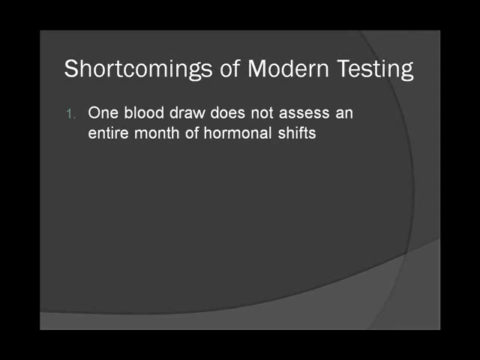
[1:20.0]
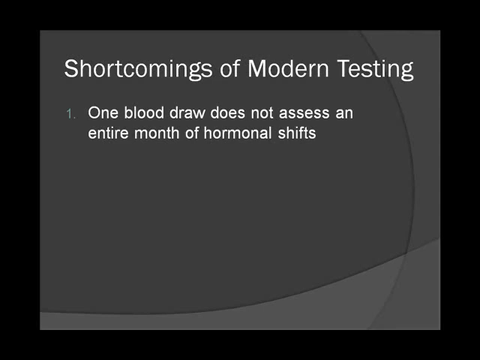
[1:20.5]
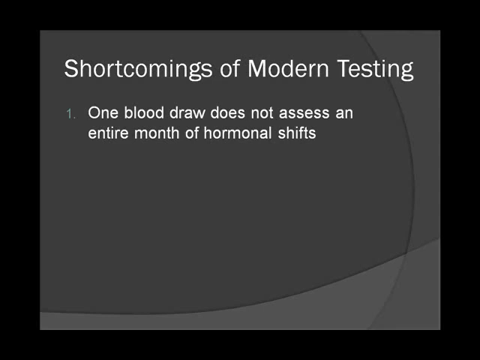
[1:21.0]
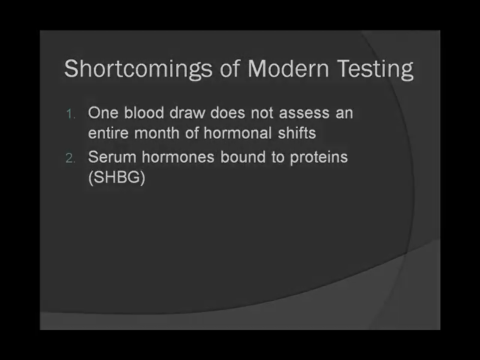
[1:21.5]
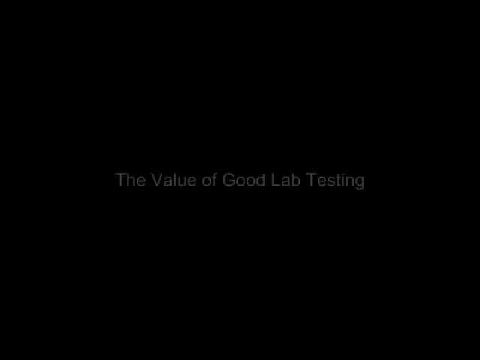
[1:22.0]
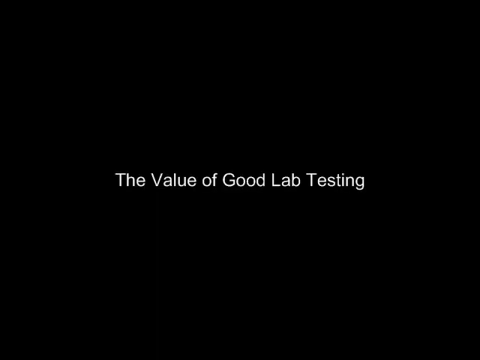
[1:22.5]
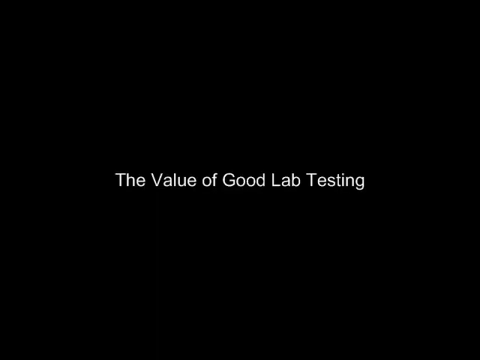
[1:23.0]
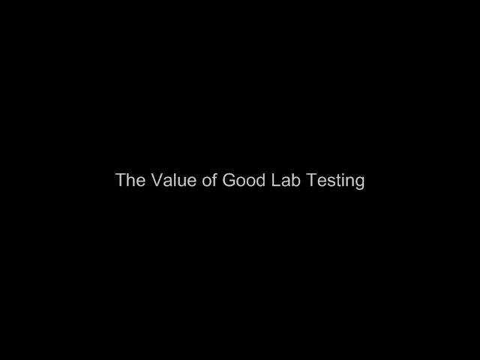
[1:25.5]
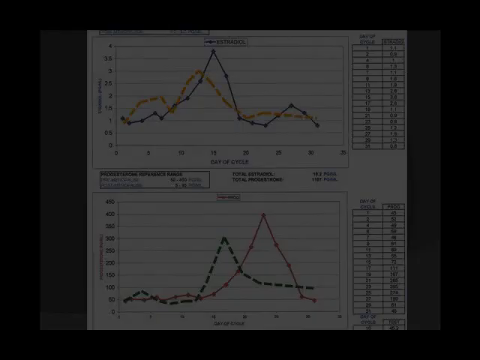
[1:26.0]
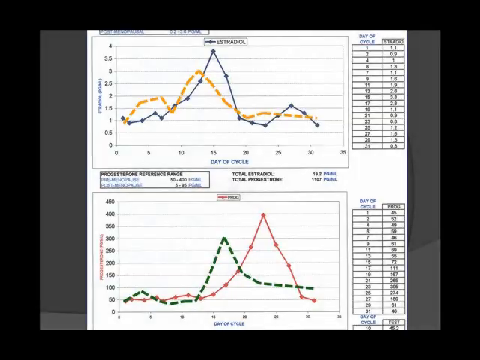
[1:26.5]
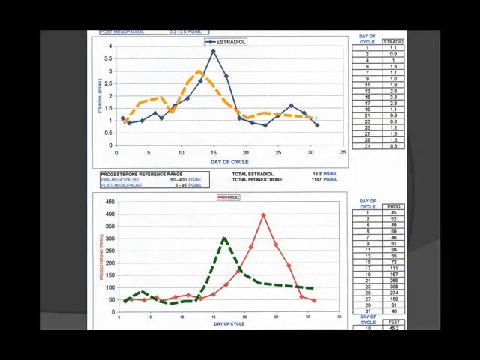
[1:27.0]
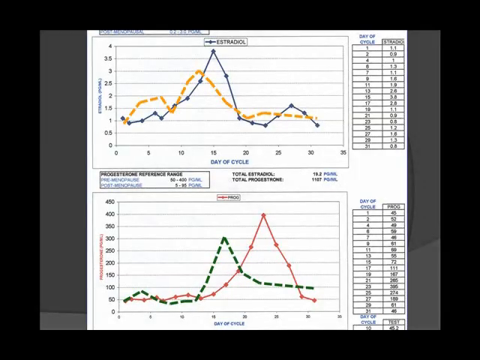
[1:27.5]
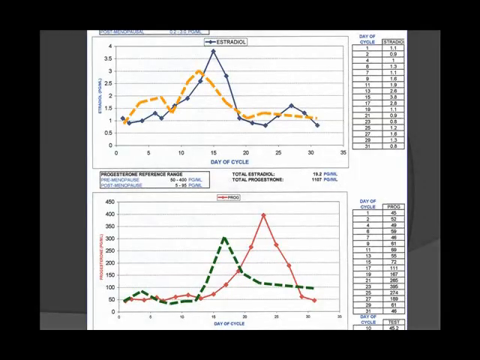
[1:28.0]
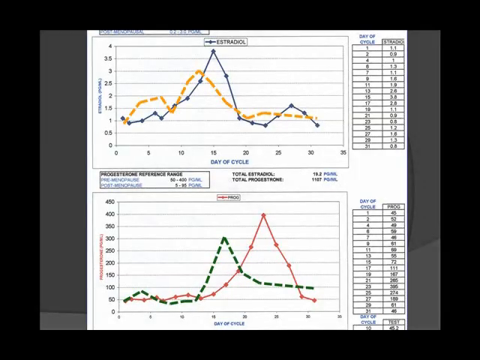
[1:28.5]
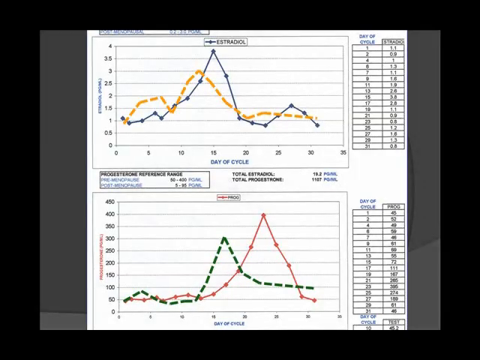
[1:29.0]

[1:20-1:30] A still picture appears within the same black frame. The vertical sides of the frame are shorter than the horizontal top and bottom, but are thicker than the top and bottom by maybe an eighth of an inch. Inside the frame are multiple intersecting circles, one of which extends beyond the frame, and where their edges intersect the colors change. The main color, taking up 85% of the area, is a medium to dark gray. A portion off to the left is a lighter gray. There are two bottom portions: the smallest, in the lower right-hand corner, is another shade lighter, and the more dominant lower portion, spanning approximately 80% of the frame's width but only about 5% of its height, is the lightest, a very light gray.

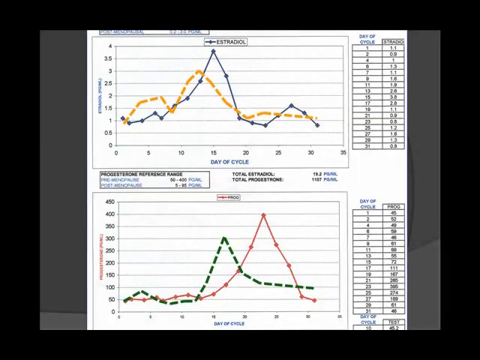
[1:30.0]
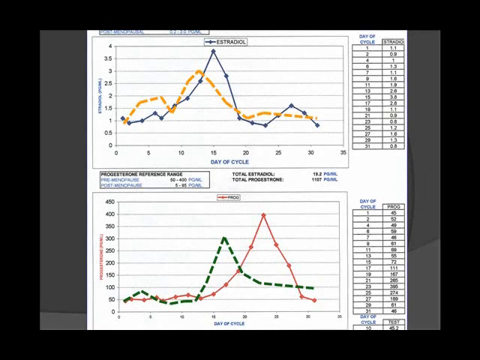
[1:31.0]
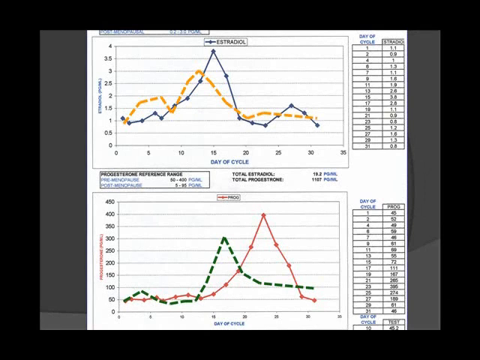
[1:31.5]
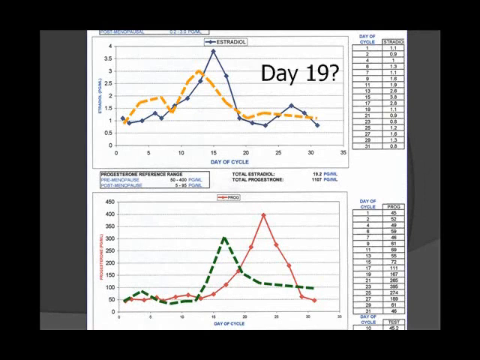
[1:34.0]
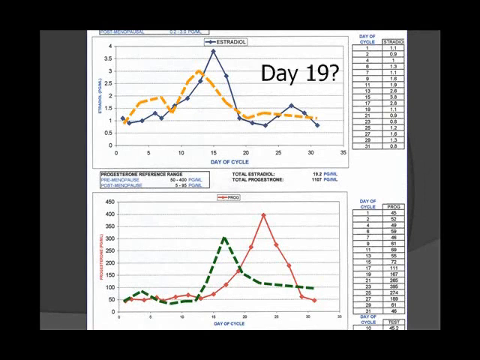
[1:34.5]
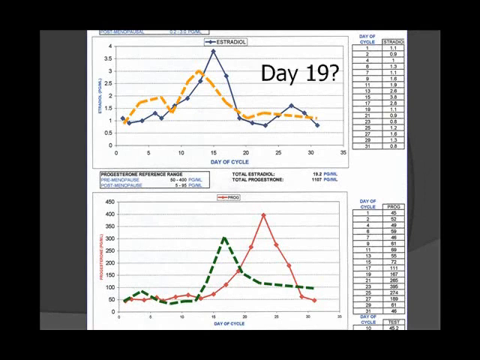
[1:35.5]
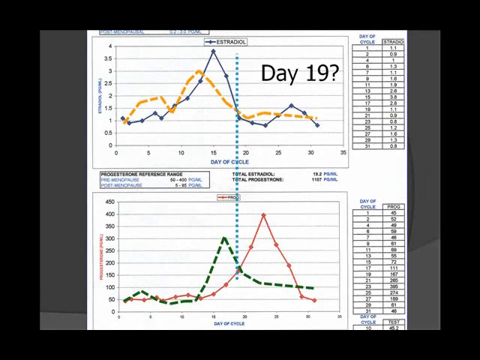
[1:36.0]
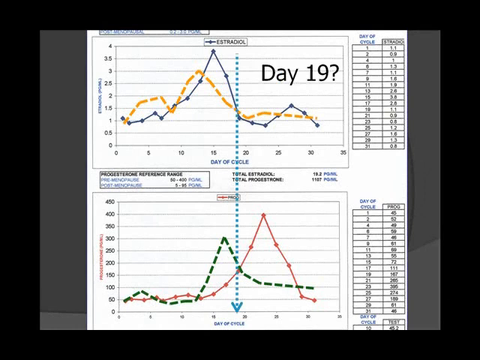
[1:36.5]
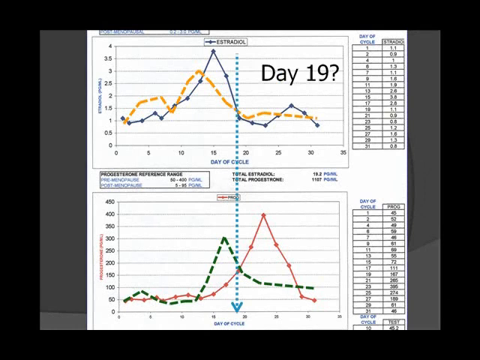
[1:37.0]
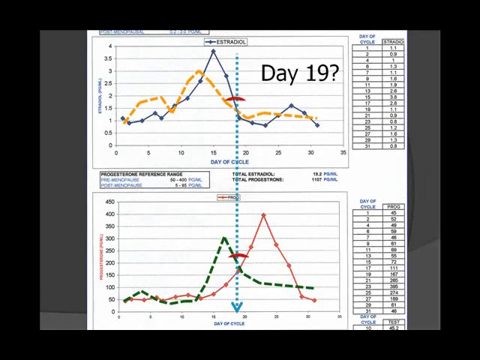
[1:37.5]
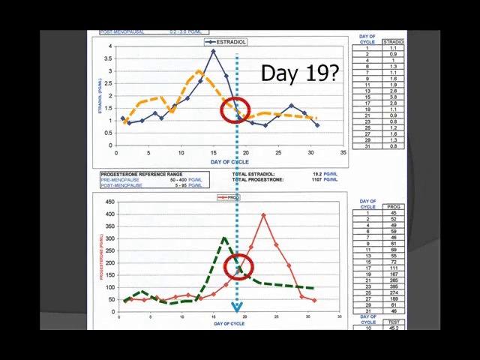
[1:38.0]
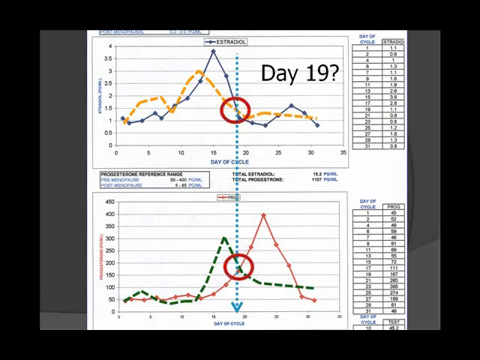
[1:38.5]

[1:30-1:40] Within the same black frame, a graph takes up the entire vertical space but only about 85% of the horizontal space, with equal margins on either side. There are two graphs, one on top of the other. The upper graph is titled "estradol" and has an x and y axis with two lines, a solid blue line and a hyphenated yellow line. The lower graph has axes with different values from the upper one, and its lines are red and green. Off to the right of both graphs, on the upper and lower levels, is a chart with two columns. The left column is titled "Day of Cycle" on both levels; the right column on the lower level is labeled "Prague", while the heading of the upper level's right column is not legible.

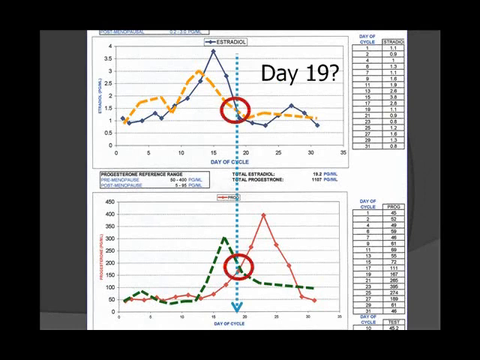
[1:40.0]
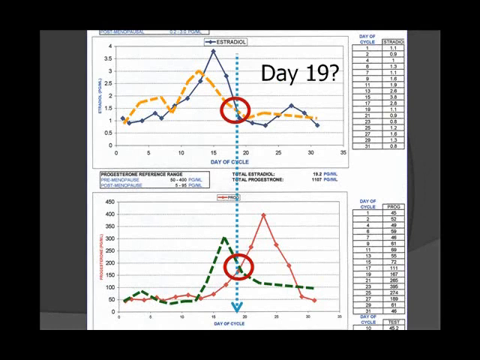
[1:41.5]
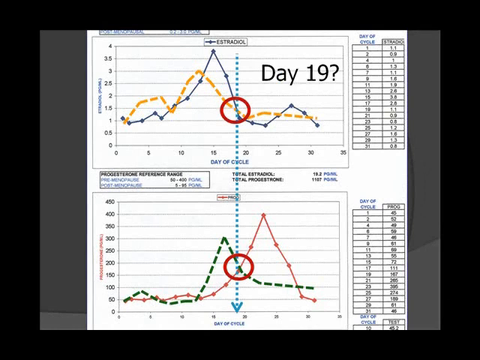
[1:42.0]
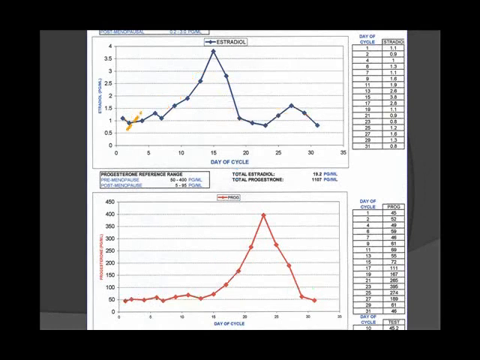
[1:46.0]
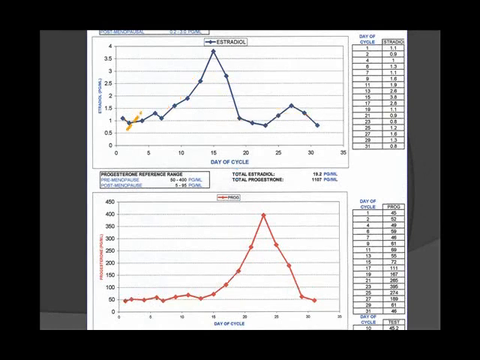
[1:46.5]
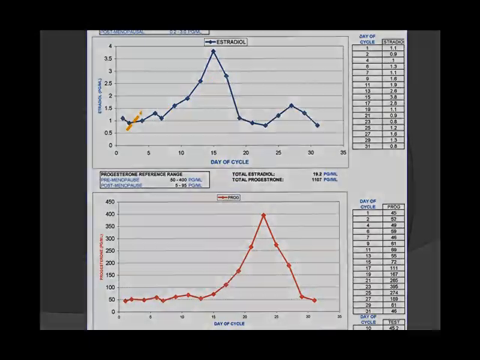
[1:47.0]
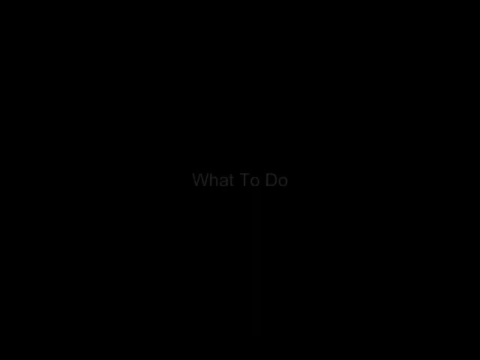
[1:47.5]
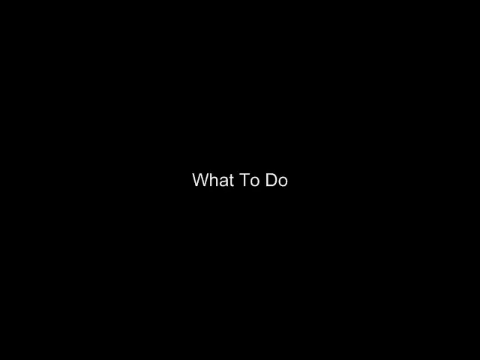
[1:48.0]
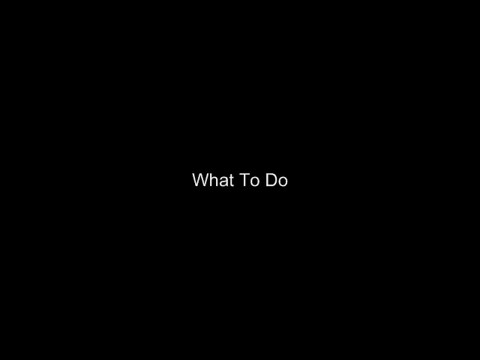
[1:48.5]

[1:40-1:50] The upper graph is shown, similar to the previous one, with an X and a Y axis. The horizontal axis is titled "Day of Cycle". The writing on the vertical axis on the left is not legible. The left-hand axis has equally spaced markings rising by 0.5 each, from 0 up to 4, giving nine values. The horizontal axis is equally spaced in multiples of 5, from 0 on the left to 35 on the right.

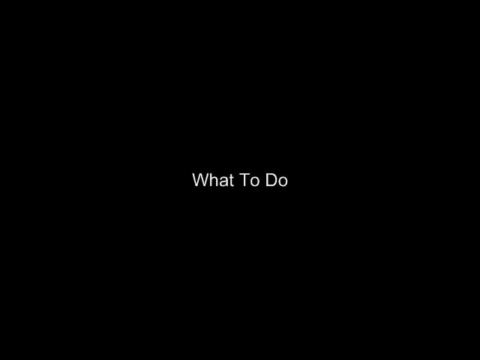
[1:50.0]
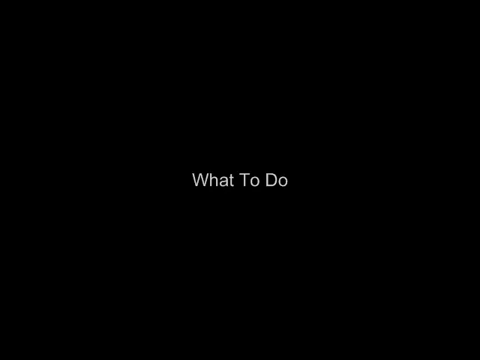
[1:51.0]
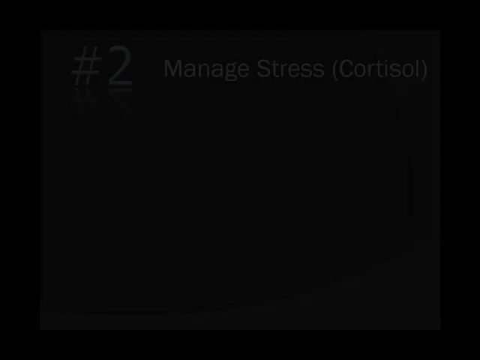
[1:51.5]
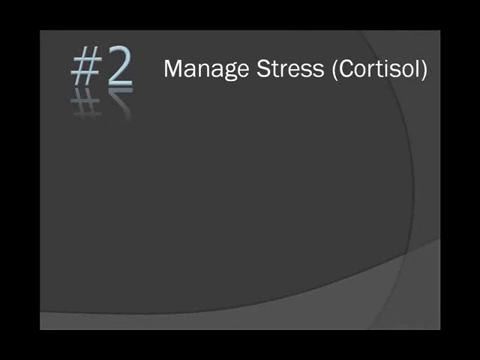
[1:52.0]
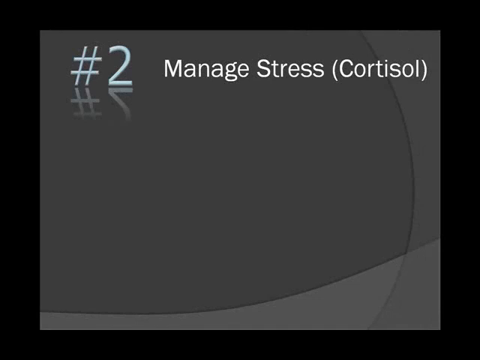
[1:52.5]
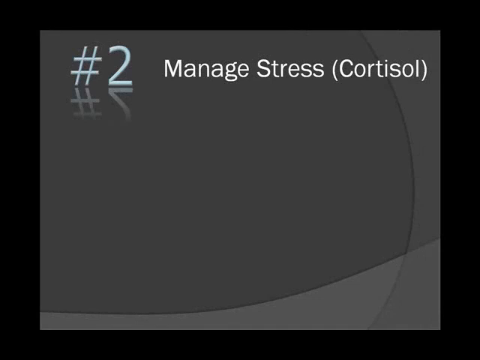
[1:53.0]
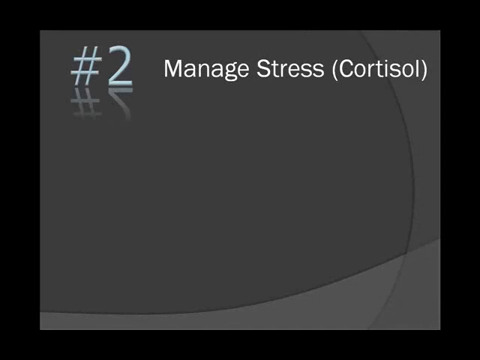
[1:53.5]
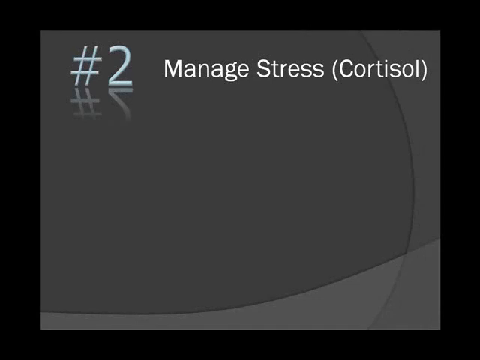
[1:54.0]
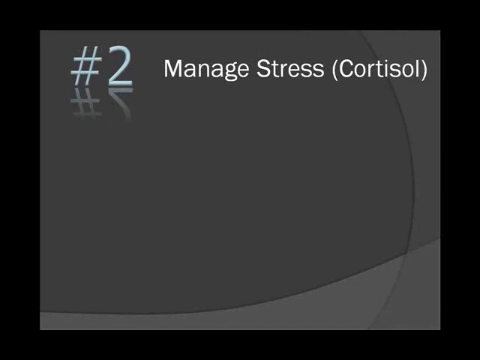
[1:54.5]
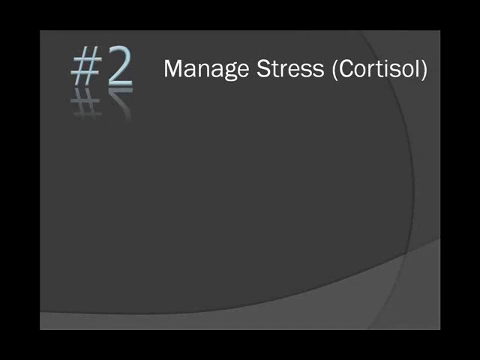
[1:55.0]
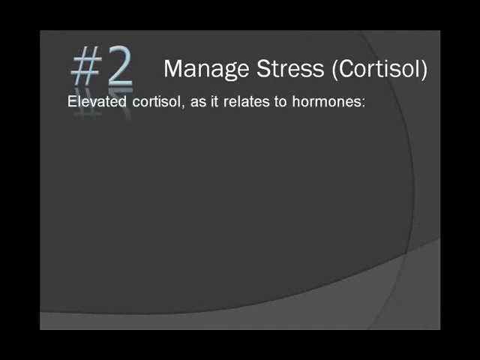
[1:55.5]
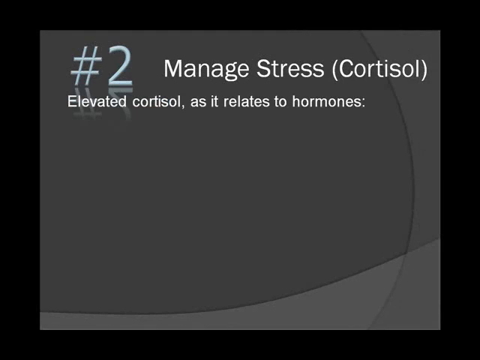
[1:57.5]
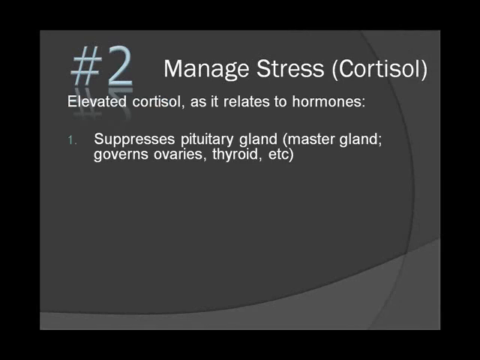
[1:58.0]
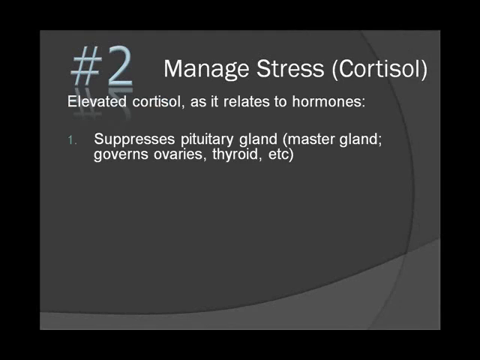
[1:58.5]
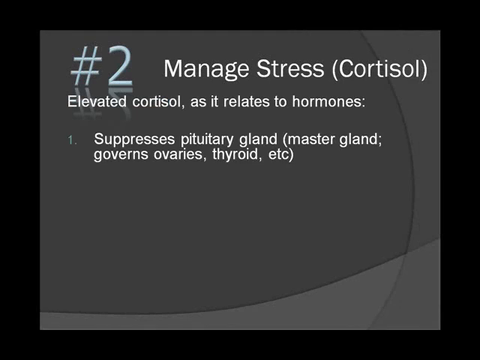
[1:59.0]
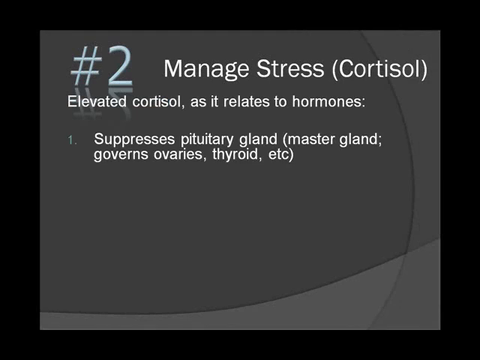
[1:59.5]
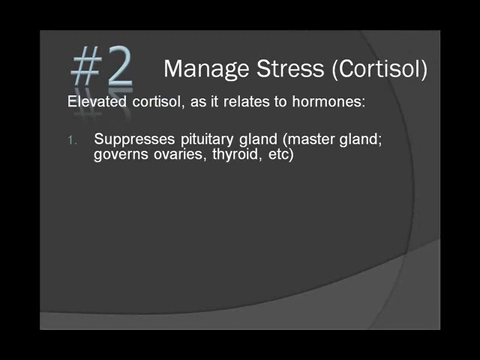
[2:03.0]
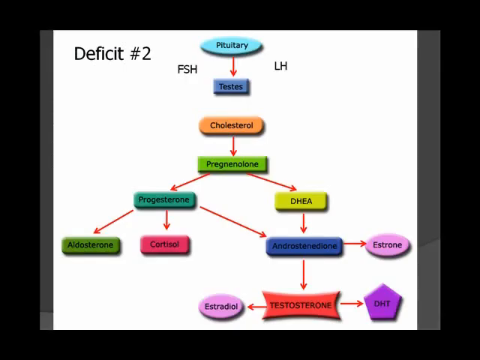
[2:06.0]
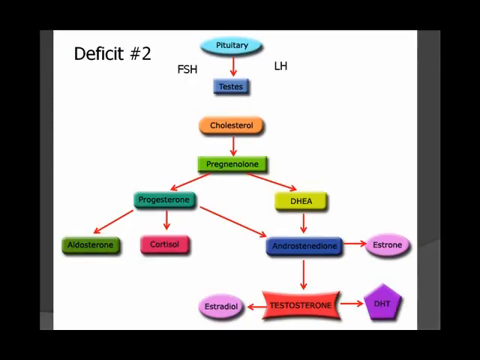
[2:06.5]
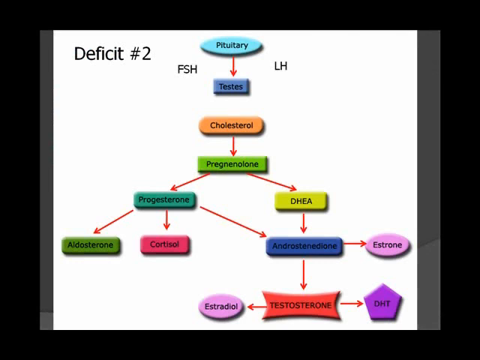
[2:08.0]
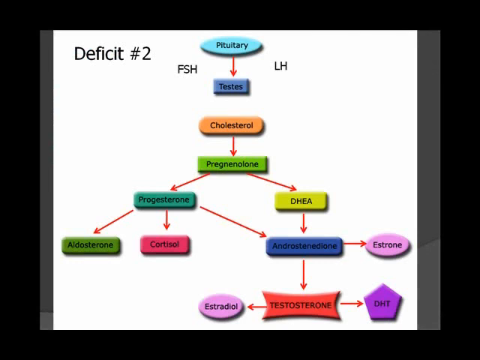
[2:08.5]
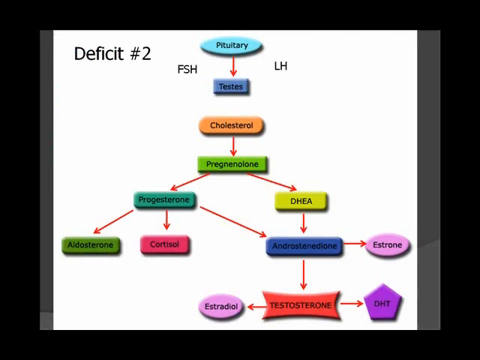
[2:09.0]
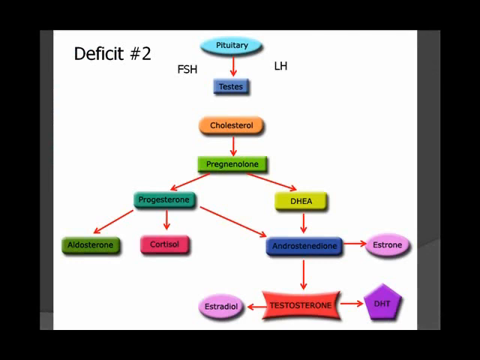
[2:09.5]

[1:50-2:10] The screen turns entirely black except for the three words "what to do", centered horizontally and slightly below the vertical middle. The slide then shows a scene similar to an earlier one, with intersecting circles dividing the frame into areas. The largest area is the darkest, and the other three distinct areas are progressively lighter, each taking up a different amount of the frame. The predominant area is in the upper left-hand corner, stretching 70% of the way across the top and maybe 85% along the bottom.